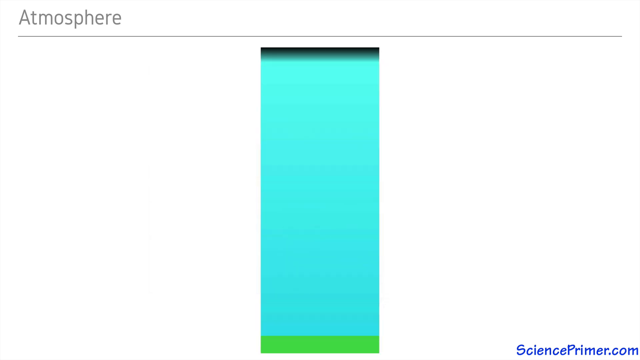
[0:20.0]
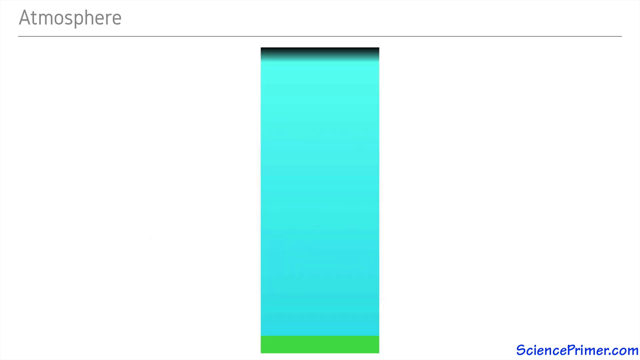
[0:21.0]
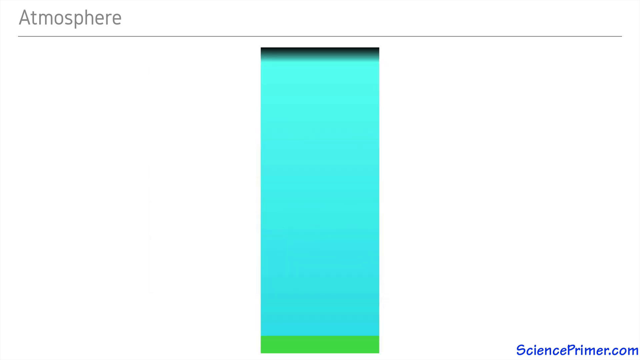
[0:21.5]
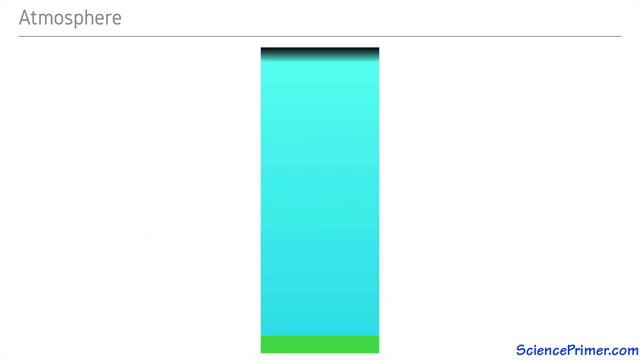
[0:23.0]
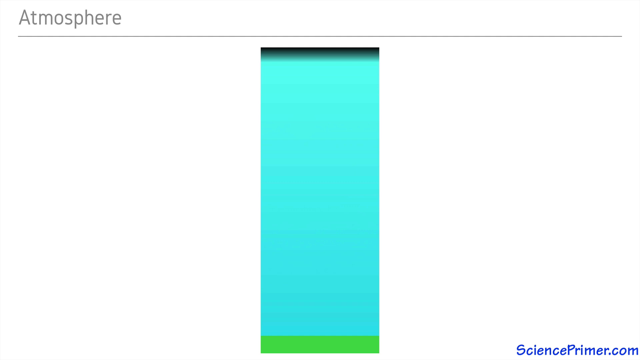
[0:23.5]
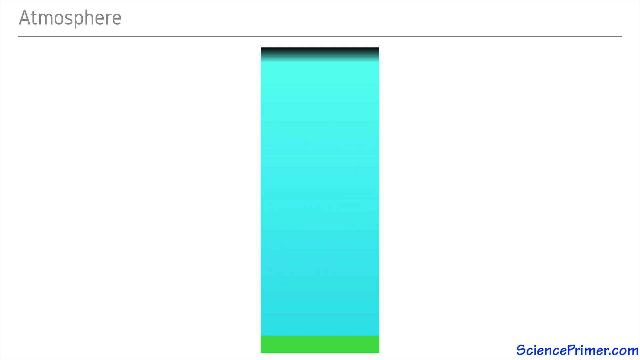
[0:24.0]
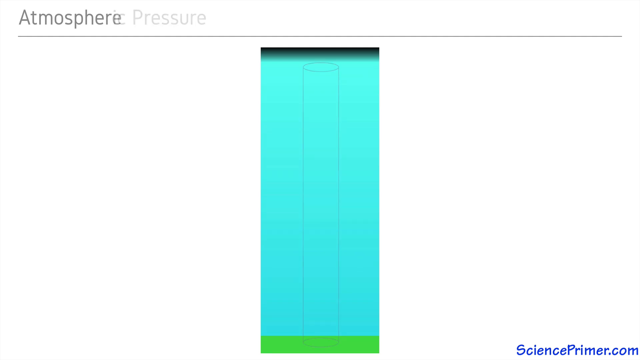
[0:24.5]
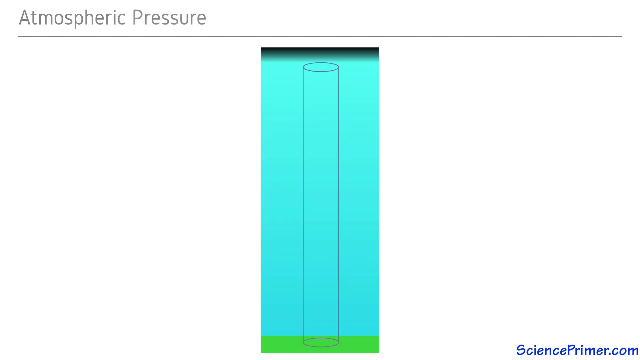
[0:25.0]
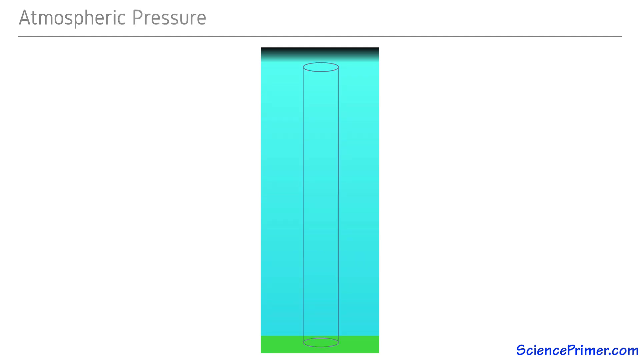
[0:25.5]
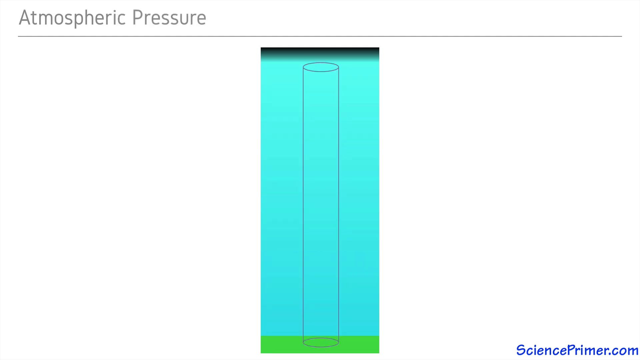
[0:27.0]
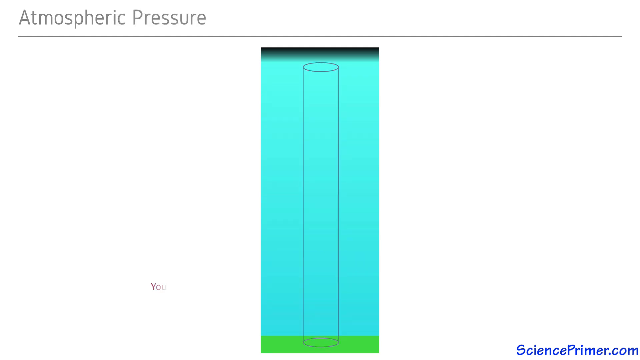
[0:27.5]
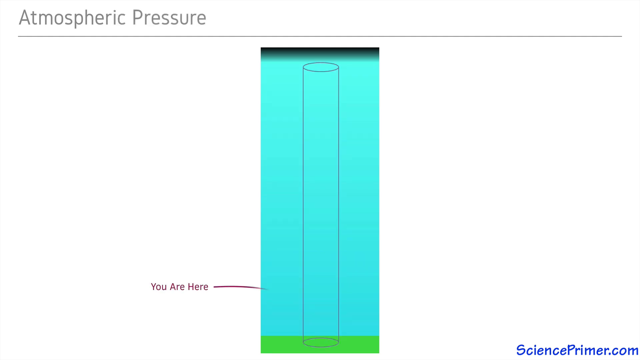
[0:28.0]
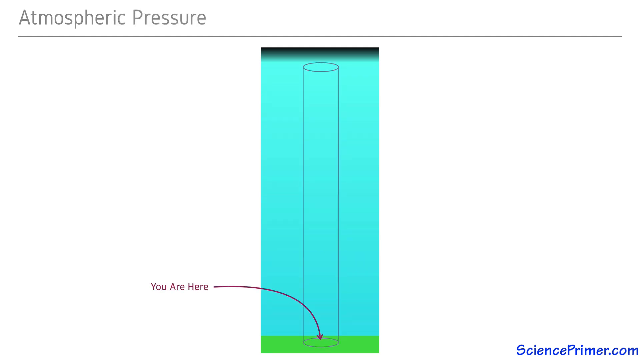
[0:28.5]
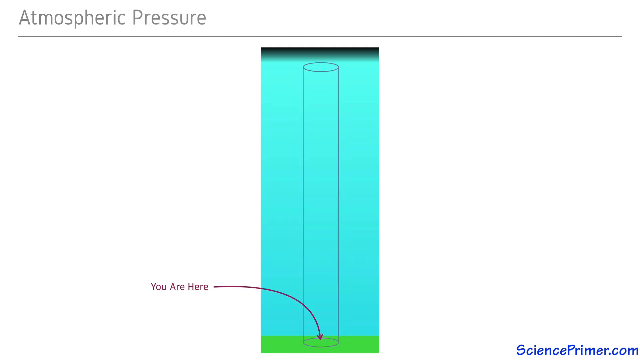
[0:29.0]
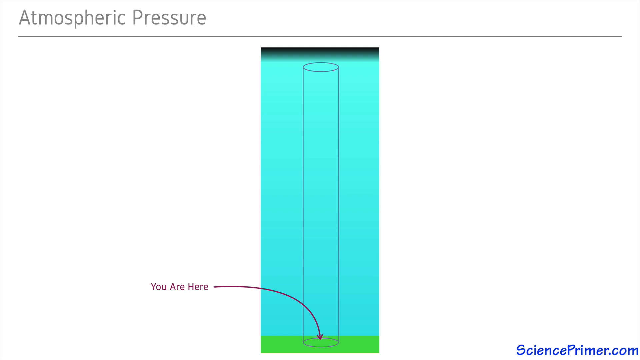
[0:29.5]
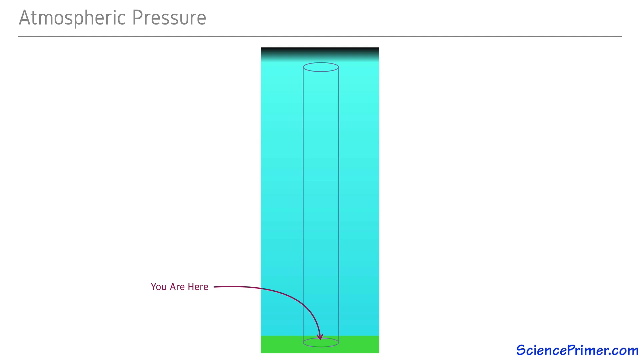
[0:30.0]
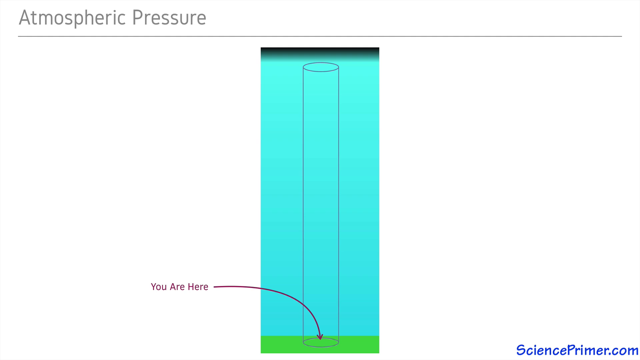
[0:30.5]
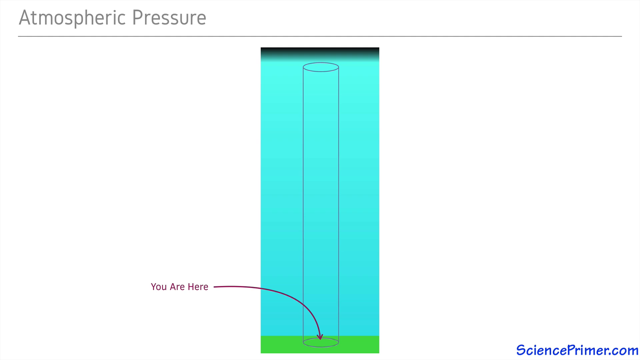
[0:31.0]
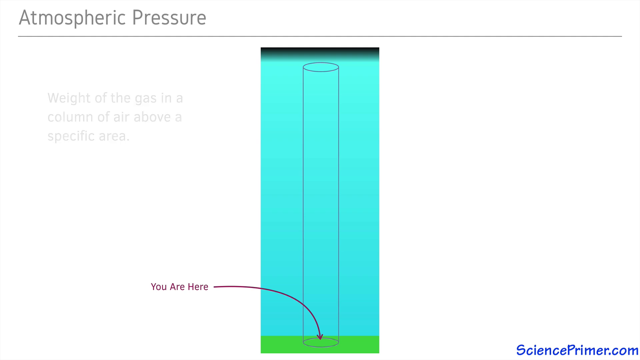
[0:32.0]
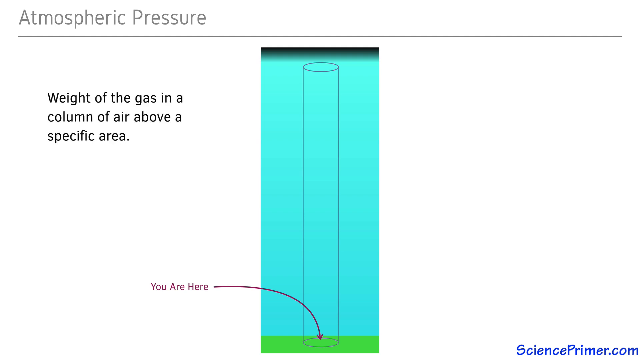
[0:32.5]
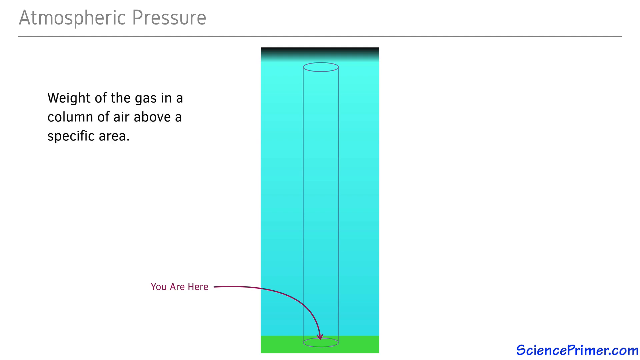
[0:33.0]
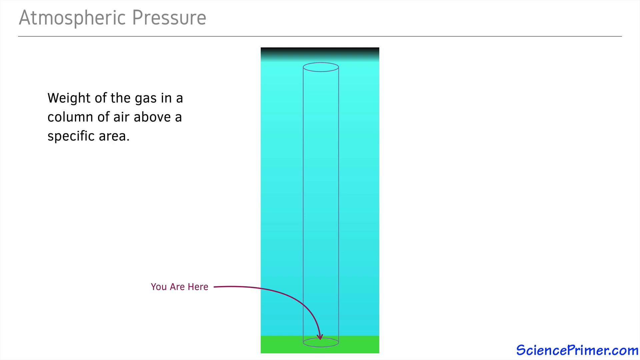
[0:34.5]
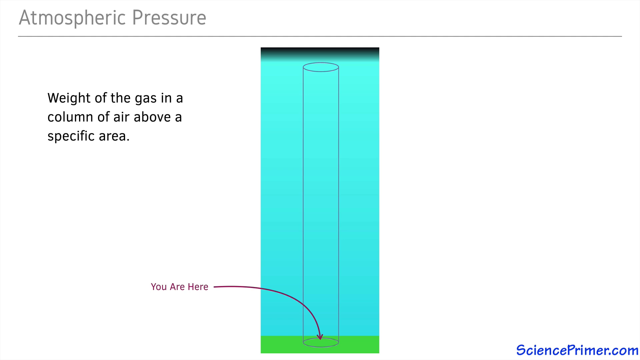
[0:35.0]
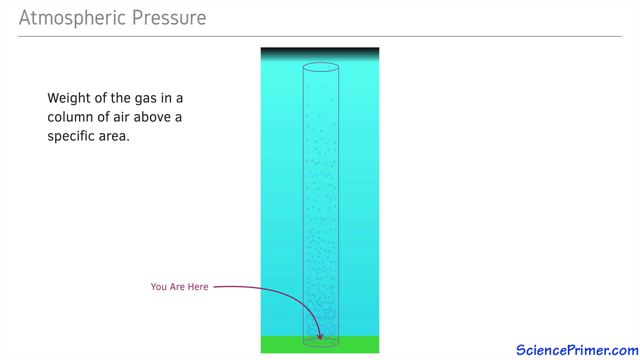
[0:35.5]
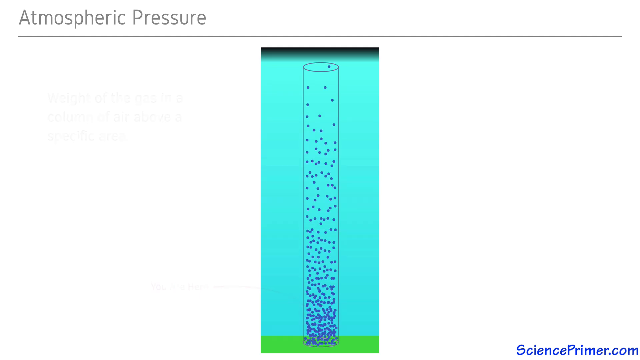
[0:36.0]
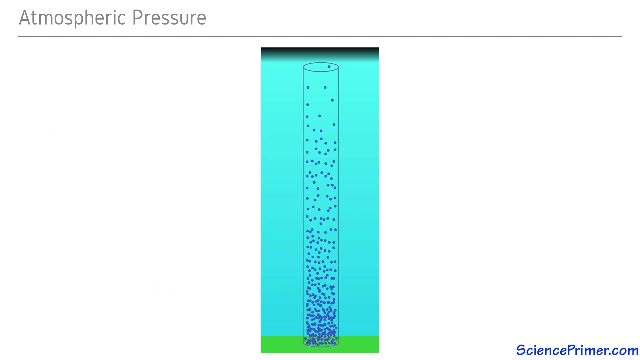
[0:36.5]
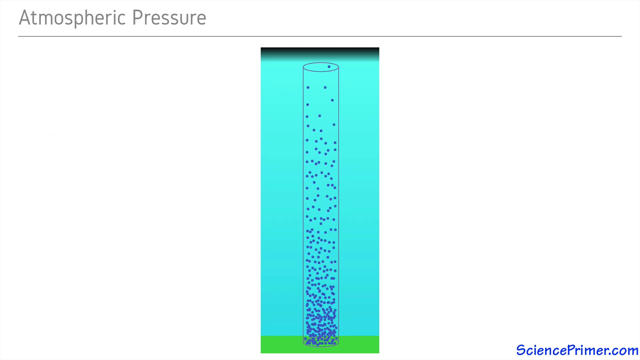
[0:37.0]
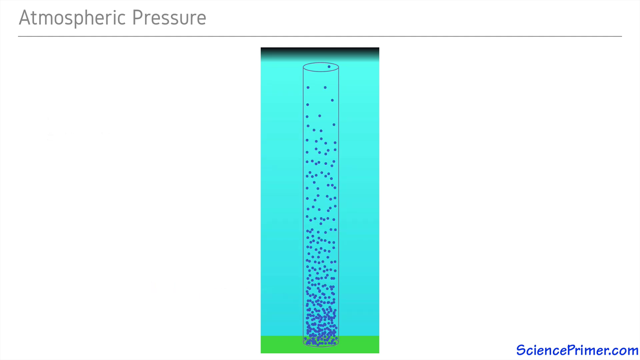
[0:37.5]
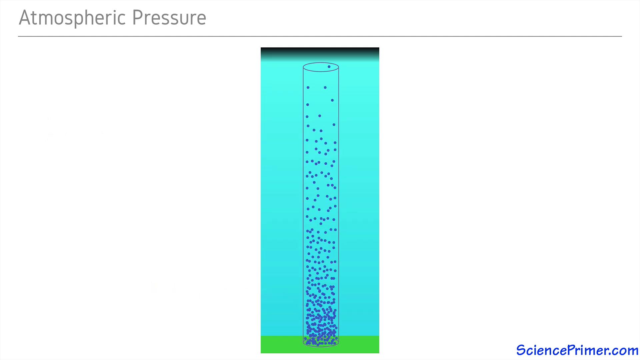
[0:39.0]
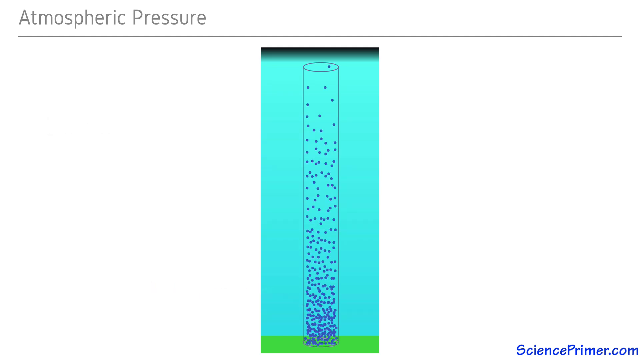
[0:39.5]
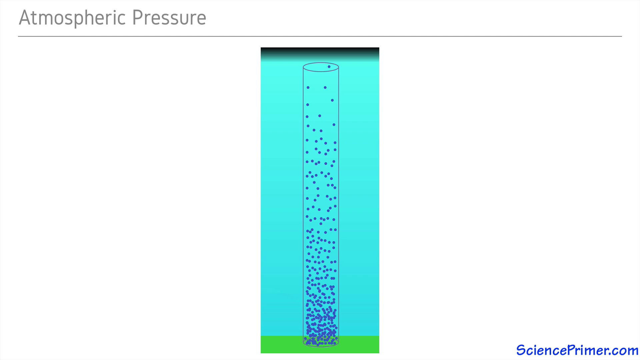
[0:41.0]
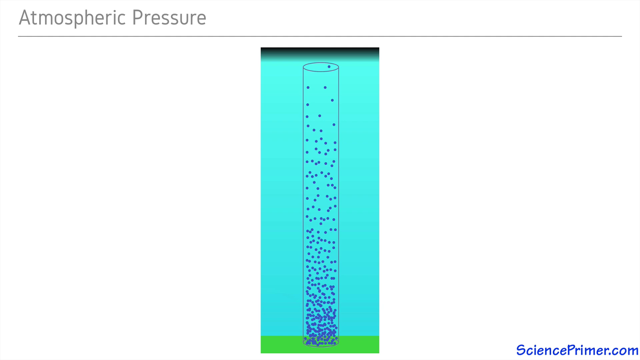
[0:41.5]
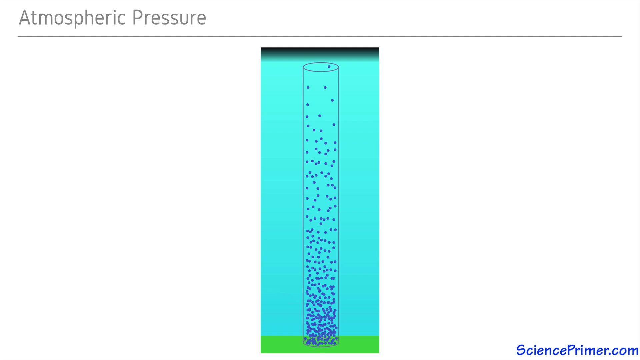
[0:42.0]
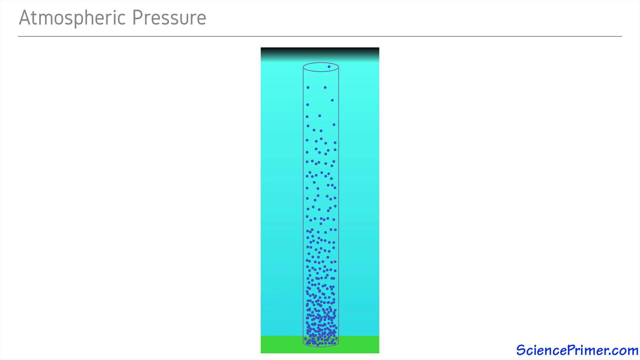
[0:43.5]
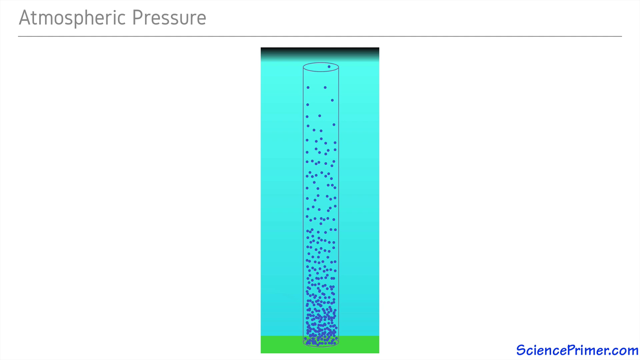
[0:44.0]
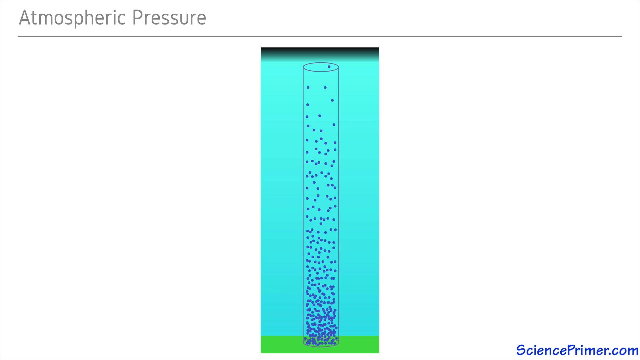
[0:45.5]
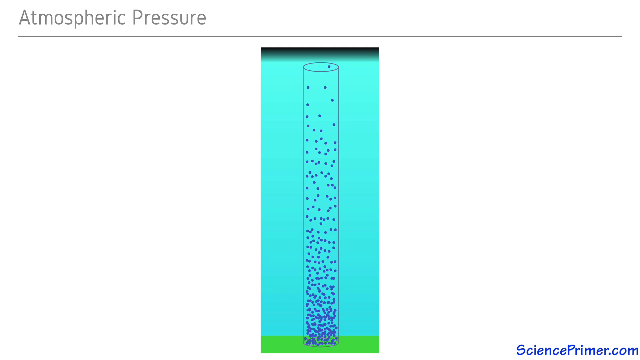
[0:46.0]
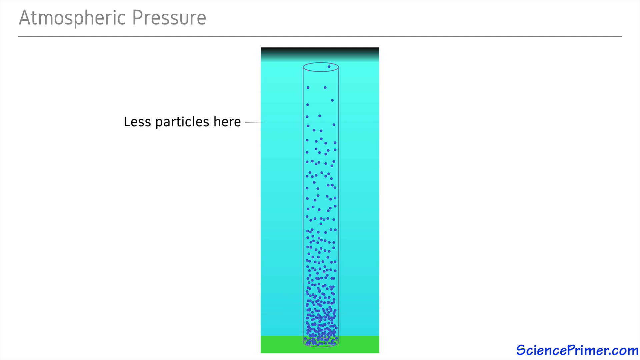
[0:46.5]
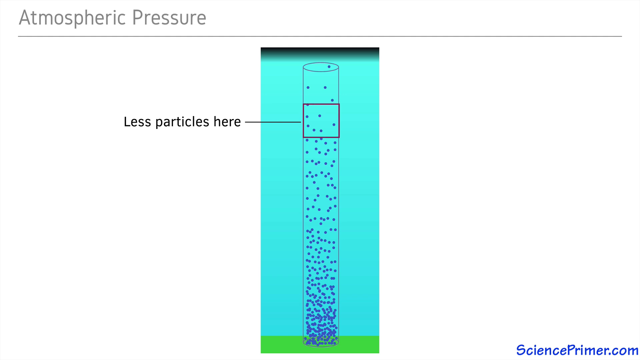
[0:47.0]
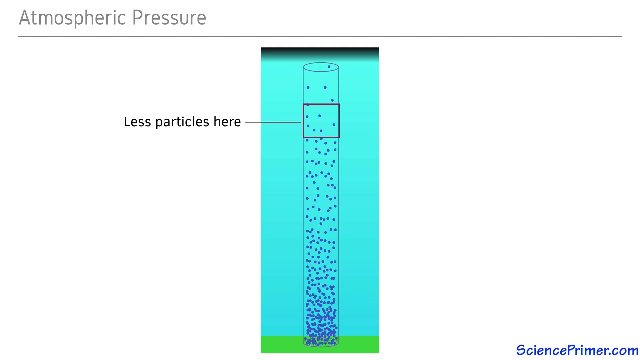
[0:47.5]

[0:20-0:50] In the middle of the standing light blue rectangle appears the outline of a very tall cylinder. In the bottom left, the words "you are here" appear with an arrow pointing to the base of the cylinder. Text in the top left reads "weight of the gas in the column of the air above a specific area." Many purple dots then appear inside the outlined cylinder, with more dots at the bottom and fewer in the upper area. Text appears in the upper left reading "less particles here," pointing to the top area within the cylinder.